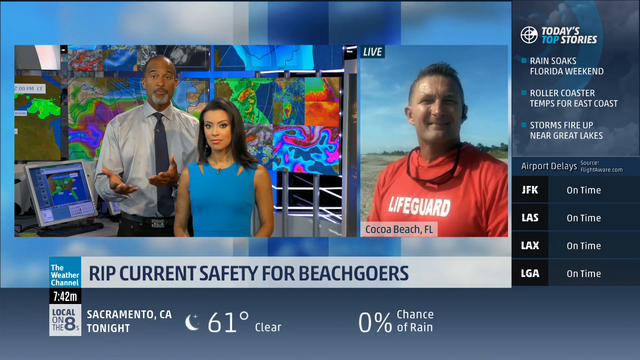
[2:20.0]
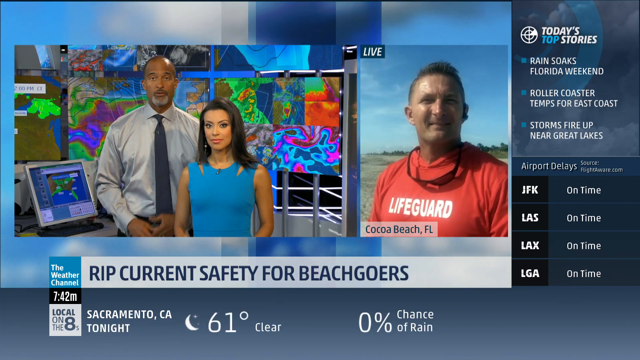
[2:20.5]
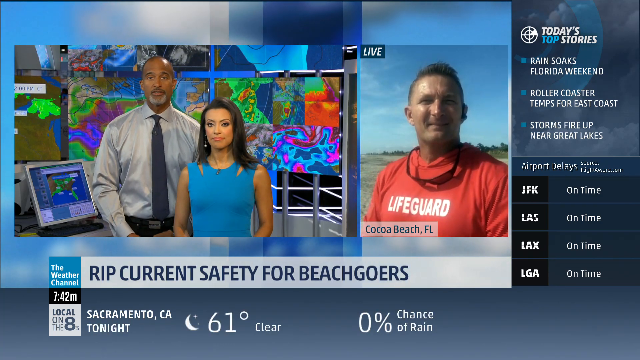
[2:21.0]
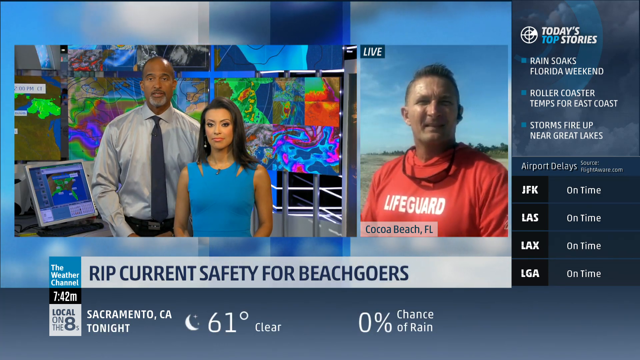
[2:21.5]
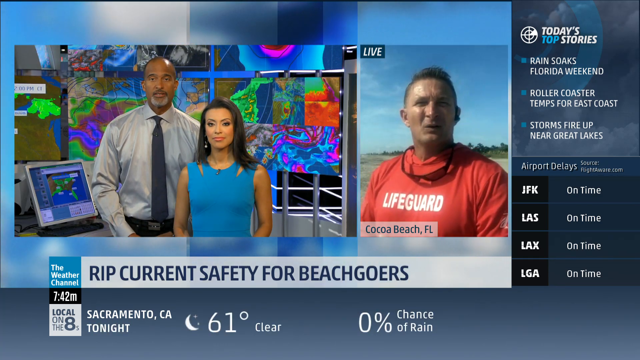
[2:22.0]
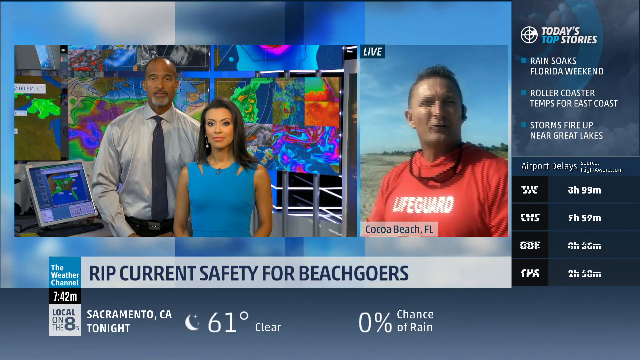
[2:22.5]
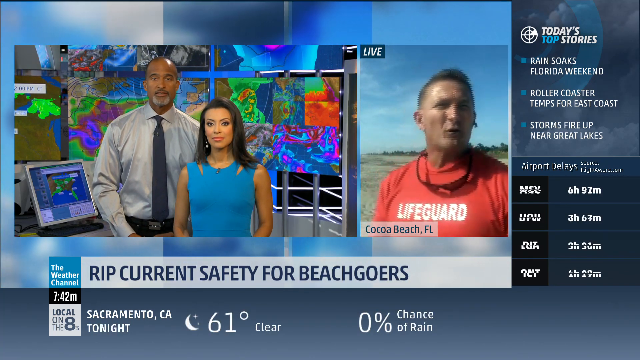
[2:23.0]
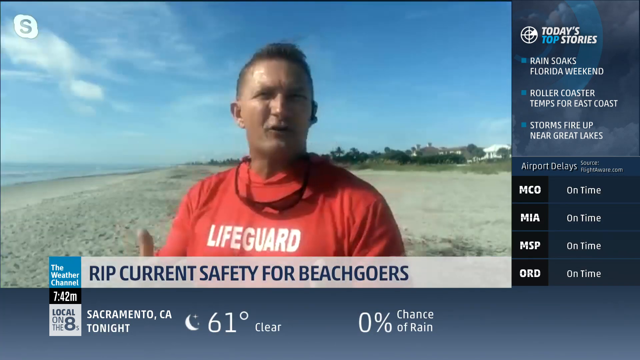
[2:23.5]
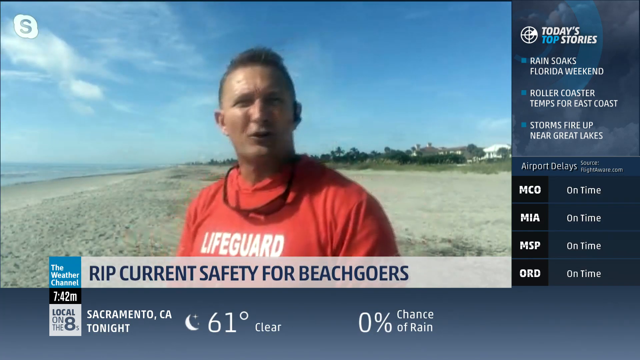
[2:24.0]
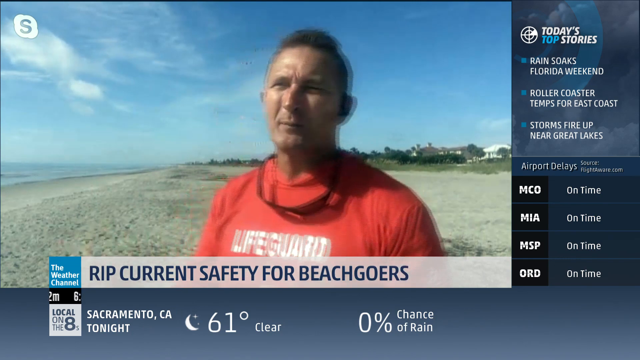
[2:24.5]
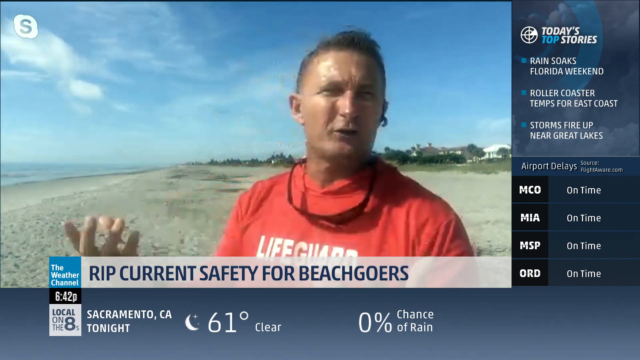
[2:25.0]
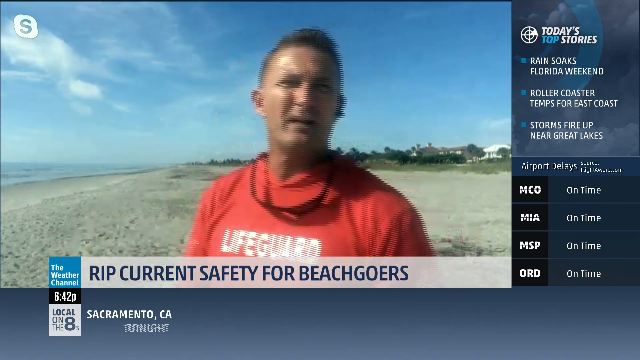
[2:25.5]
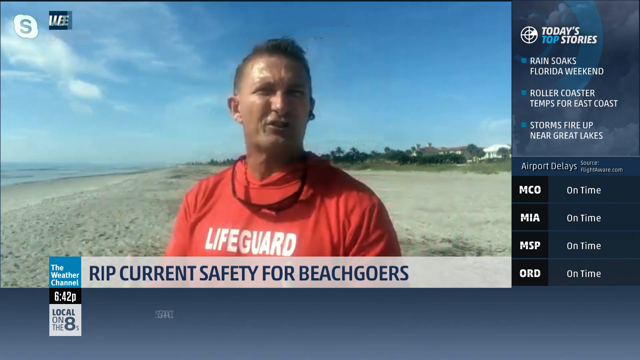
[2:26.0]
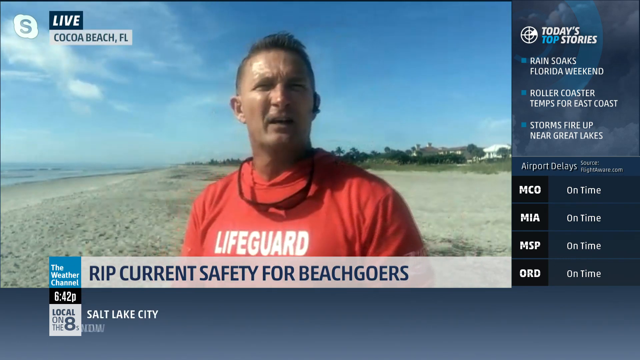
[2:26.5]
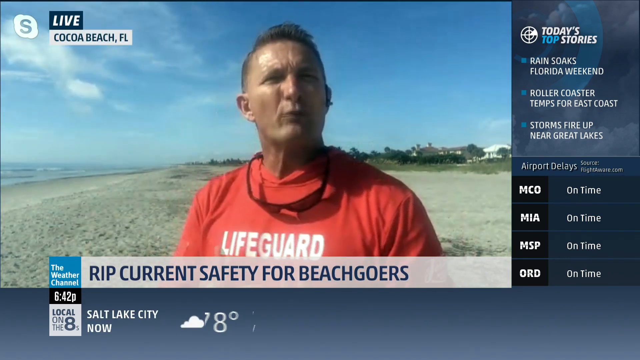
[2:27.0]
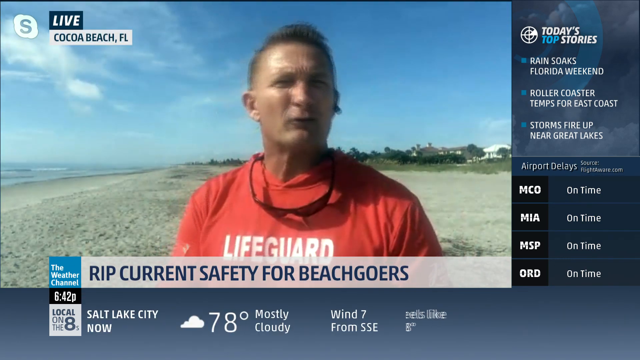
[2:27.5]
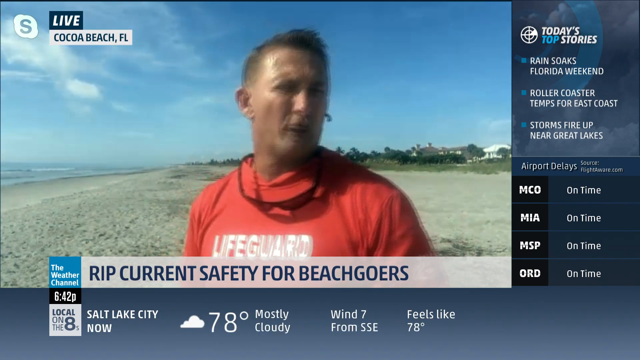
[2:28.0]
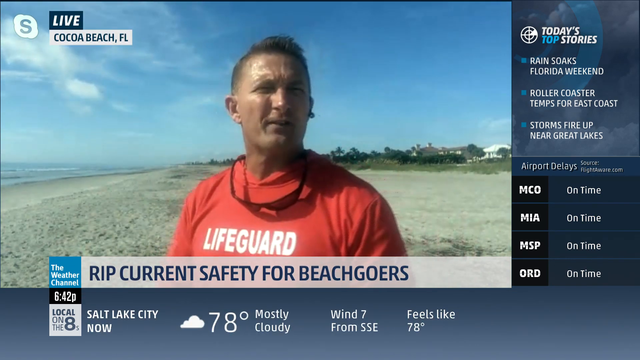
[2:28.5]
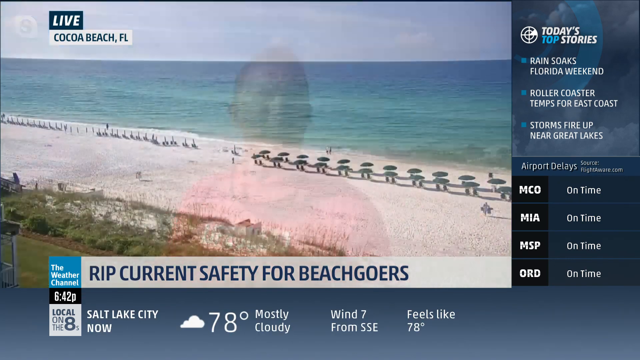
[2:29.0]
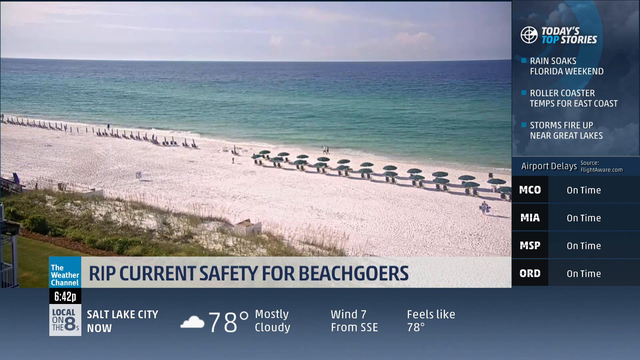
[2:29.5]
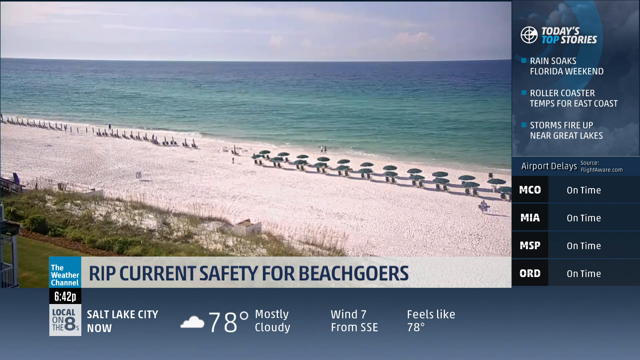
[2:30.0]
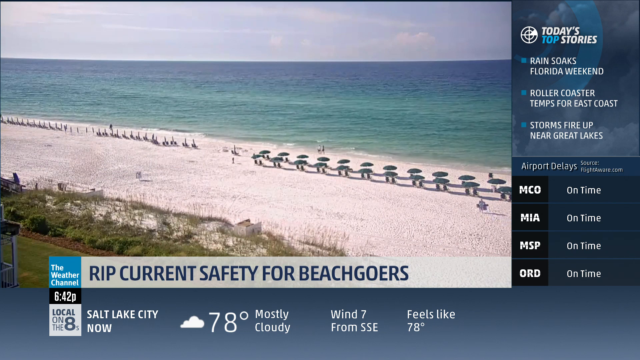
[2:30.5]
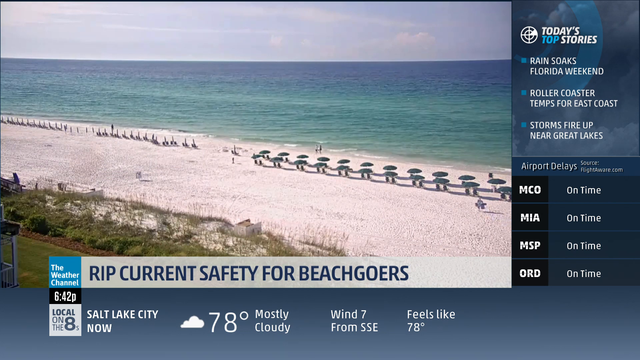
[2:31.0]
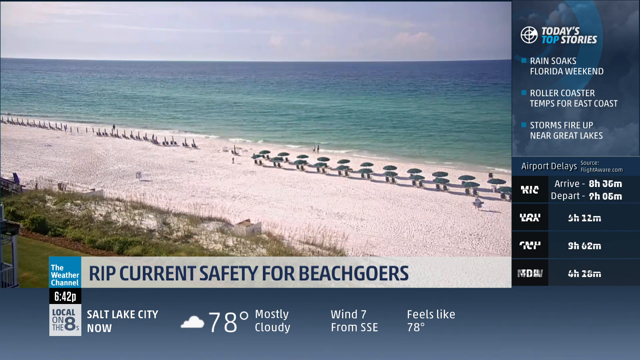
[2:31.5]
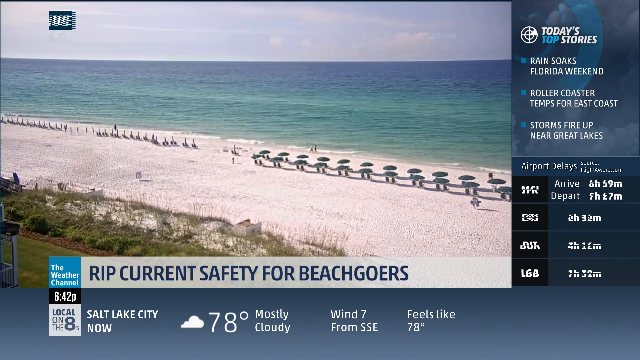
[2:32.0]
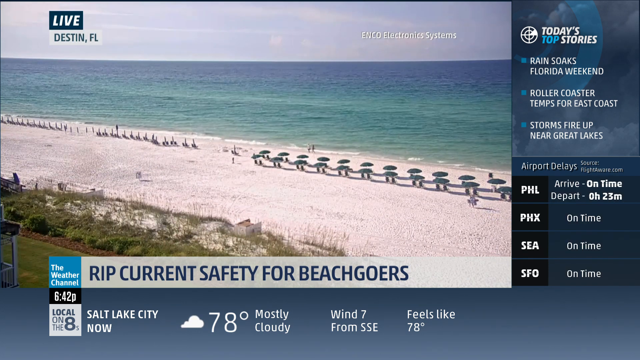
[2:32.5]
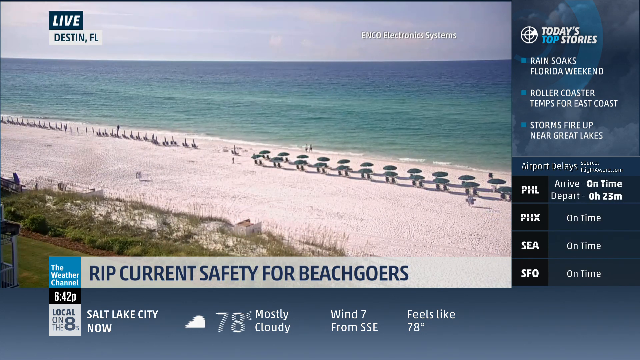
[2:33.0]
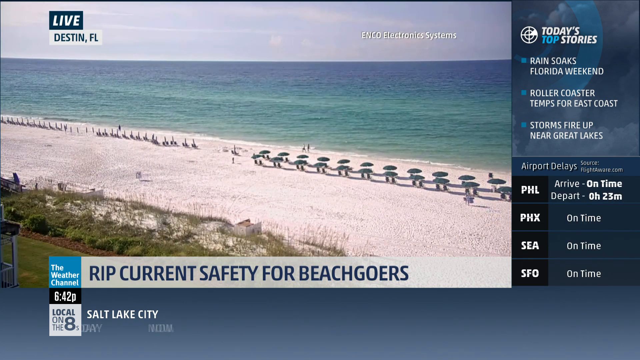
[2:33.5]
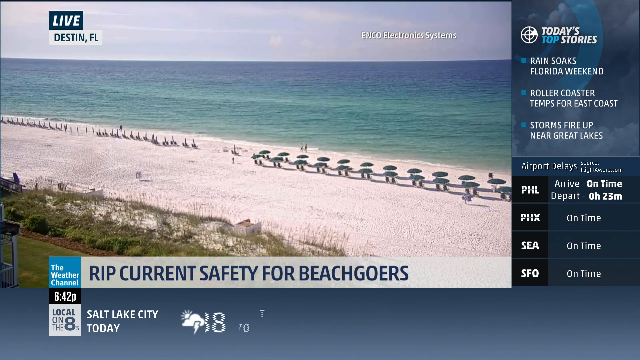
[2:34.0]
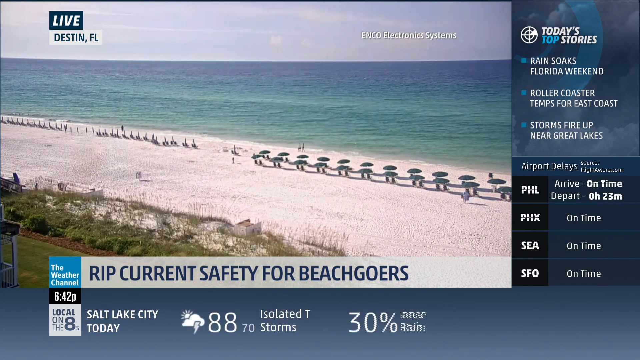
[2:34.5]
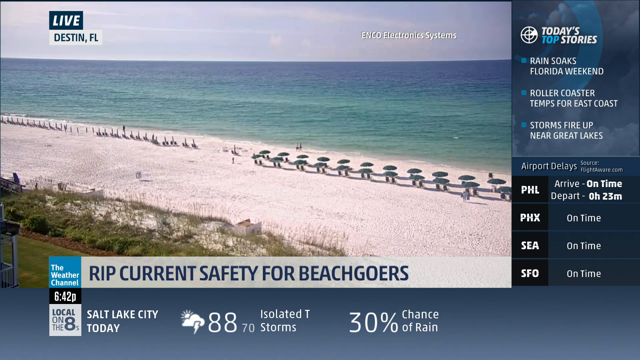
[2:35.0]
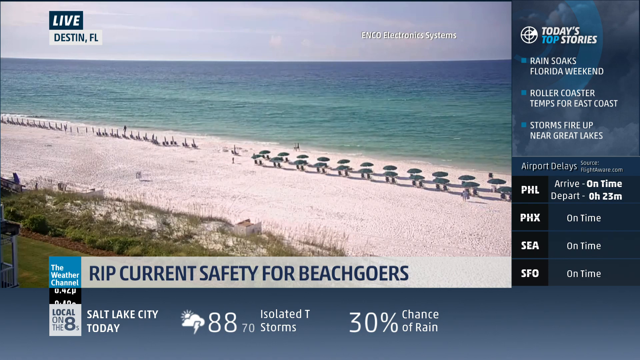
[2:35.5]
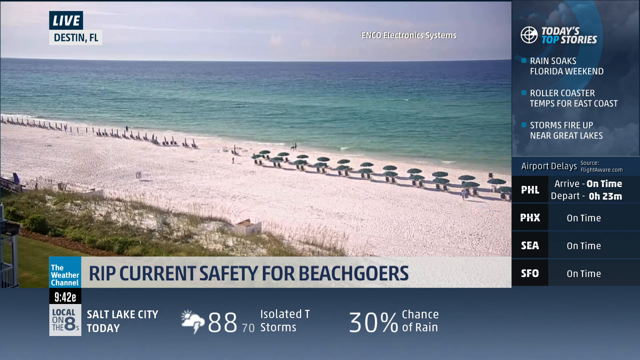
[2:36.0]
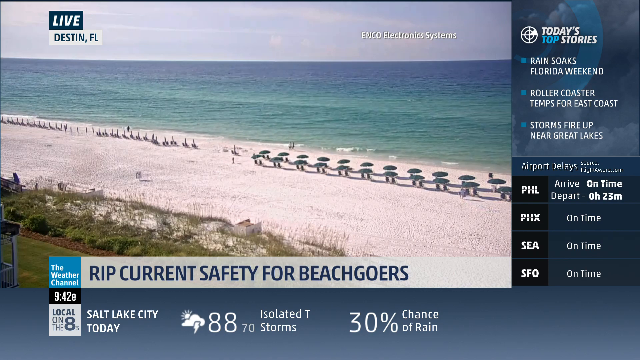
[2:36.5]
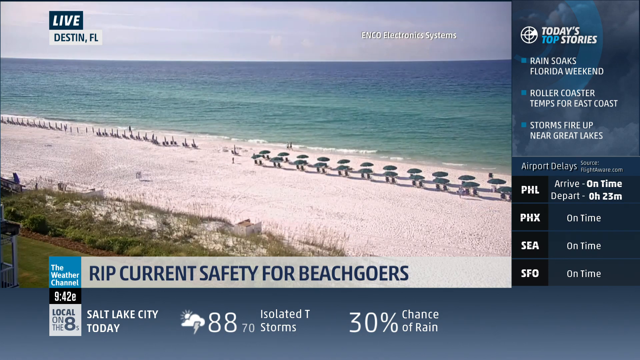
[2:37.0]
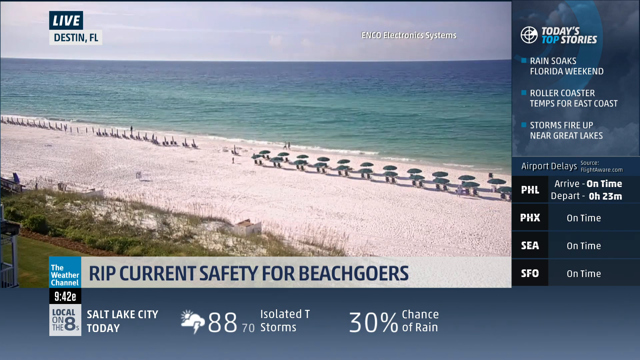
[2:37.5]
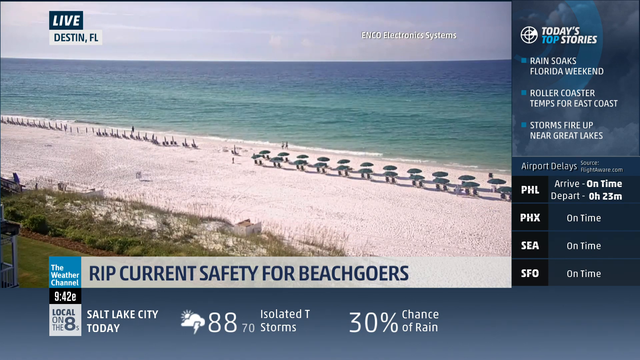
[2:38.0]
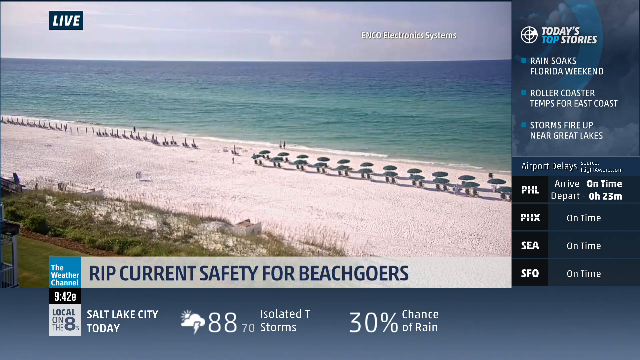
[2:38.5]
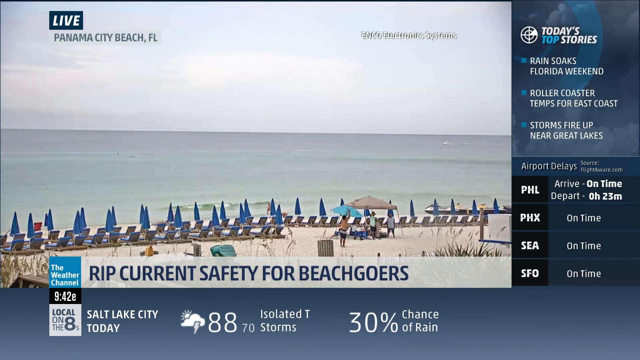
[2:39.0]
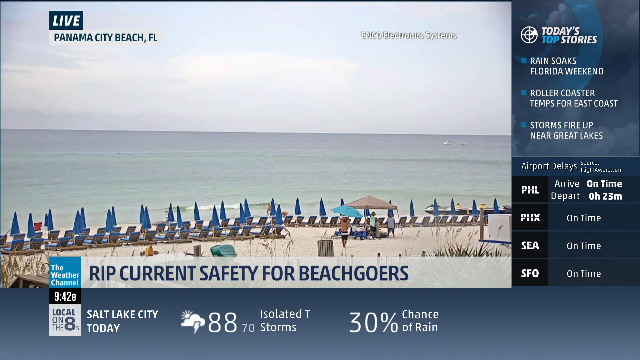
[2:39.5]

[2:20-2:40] The Weather Channel story reads "rip current safety for beachgoers." A lifeguard talks to the camera about rip currents. People are on the beach at Dustin, Florida, and the ocean looks calm. A ticker below gives Salt Lake City weather right now as 78 degrees, mostly cloudy, and earlier today 88 with isolated thunderstorms and a 30% chance of rain. At the top right, today's top stories read "Rain soaks Florida weekend," "roller coaster temps for East Coast," and "storms fire up near Great Lakes." Below that, airport delays show MCO, MIA, MSP, and ORD on time. Conditions for different beaches are shown: a calm beach live at Dustin, Florida, and calm for Panama City, Florida.